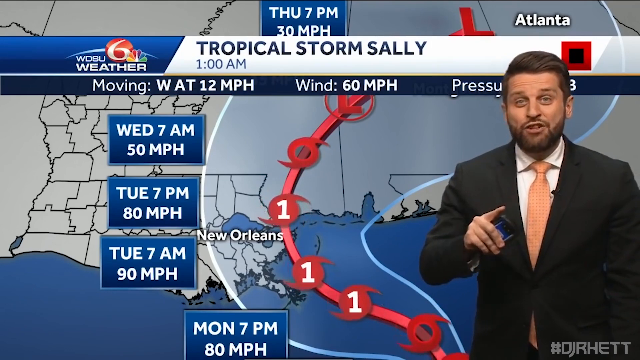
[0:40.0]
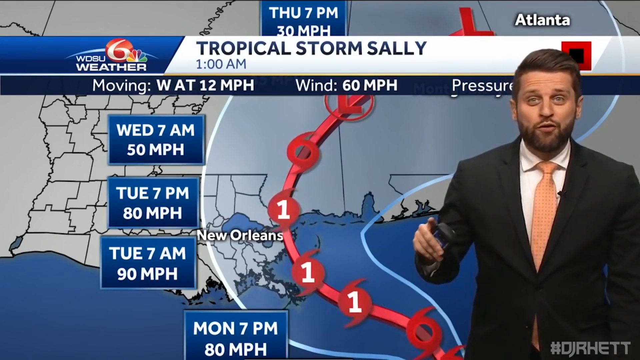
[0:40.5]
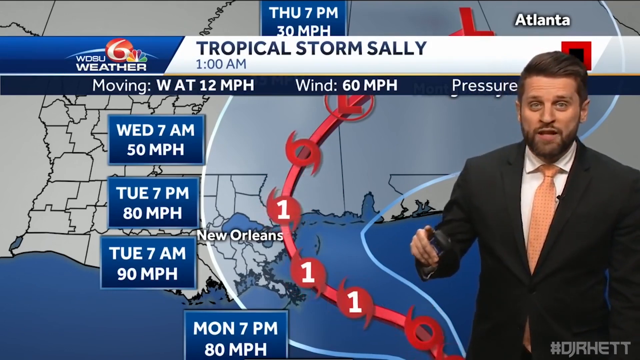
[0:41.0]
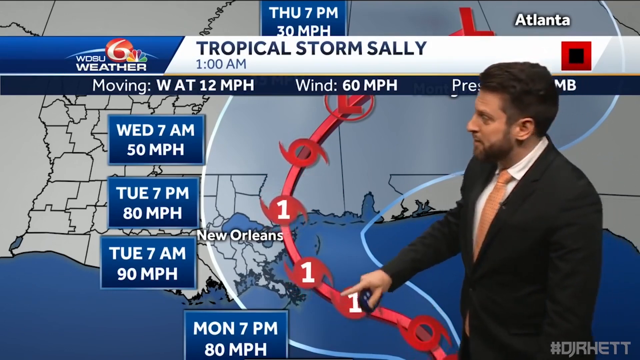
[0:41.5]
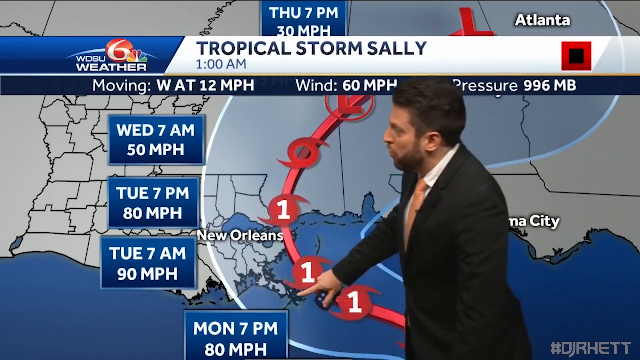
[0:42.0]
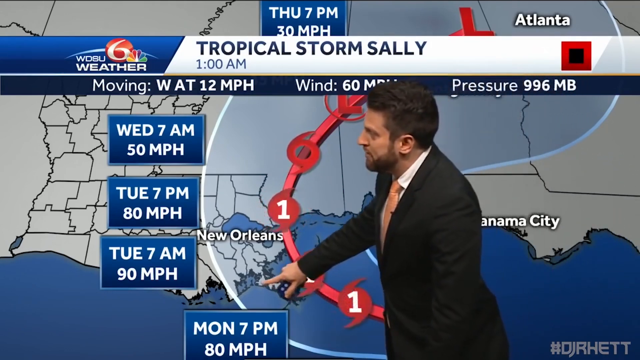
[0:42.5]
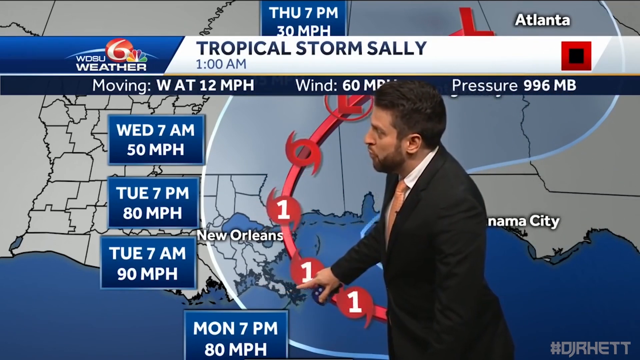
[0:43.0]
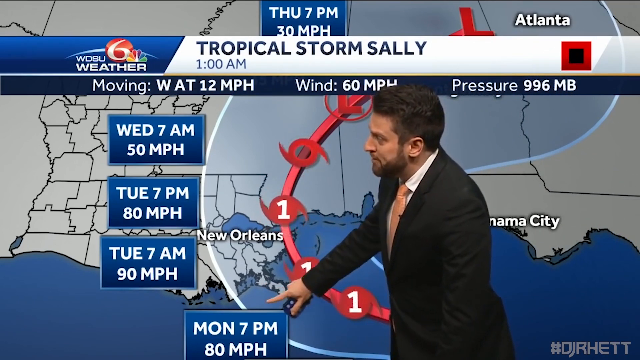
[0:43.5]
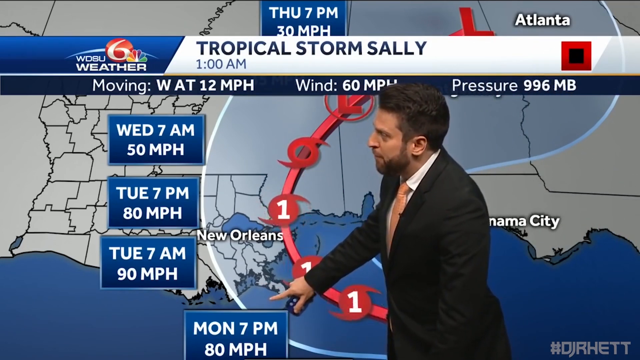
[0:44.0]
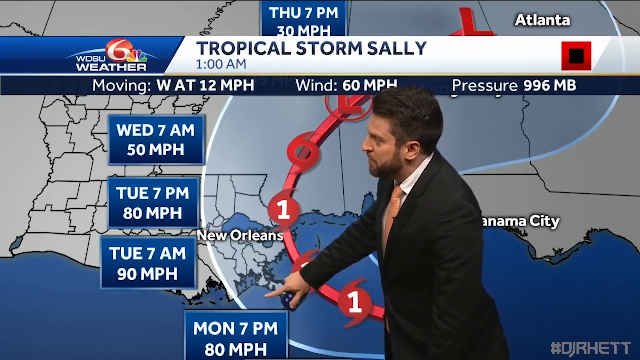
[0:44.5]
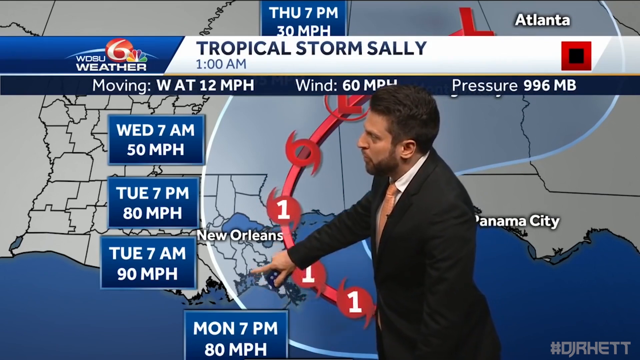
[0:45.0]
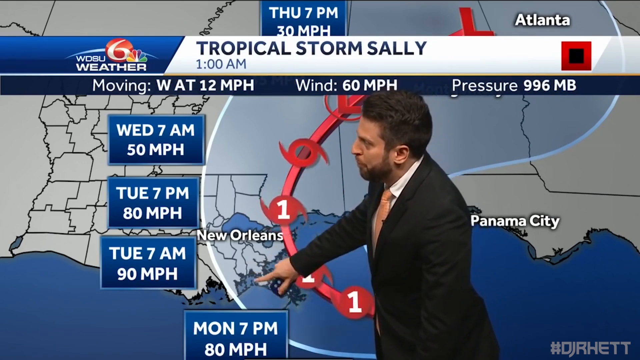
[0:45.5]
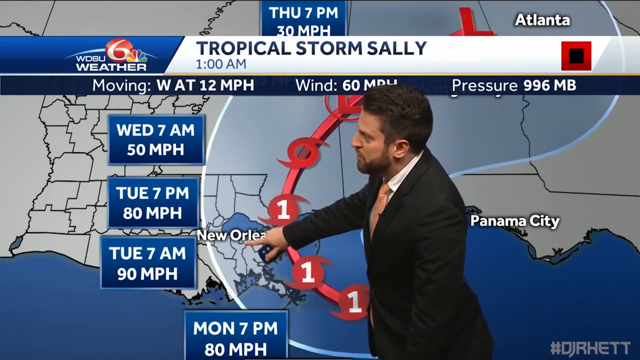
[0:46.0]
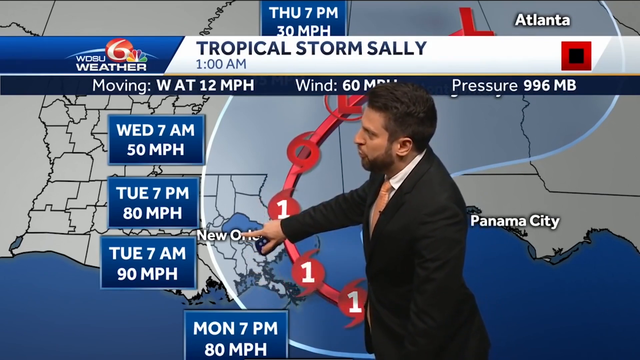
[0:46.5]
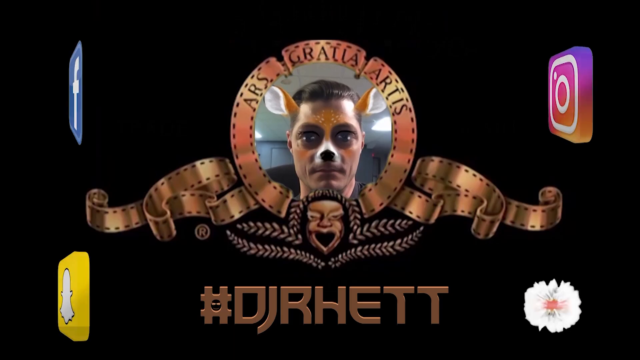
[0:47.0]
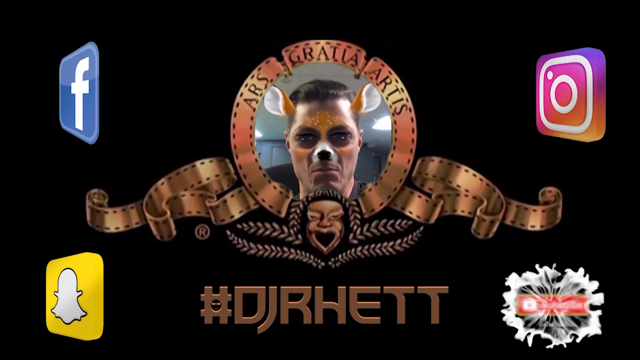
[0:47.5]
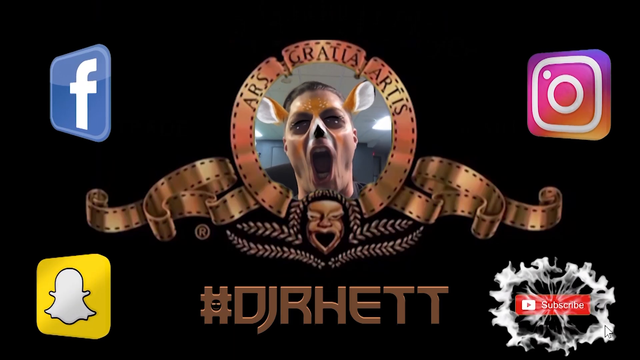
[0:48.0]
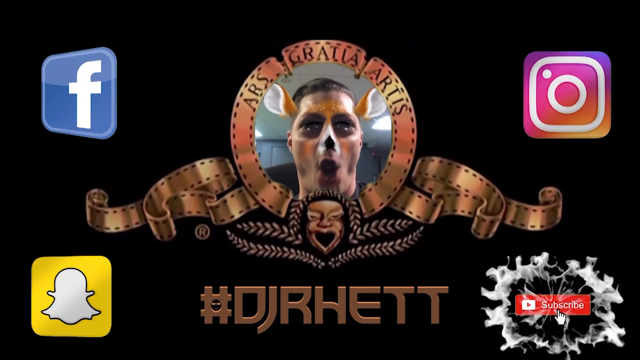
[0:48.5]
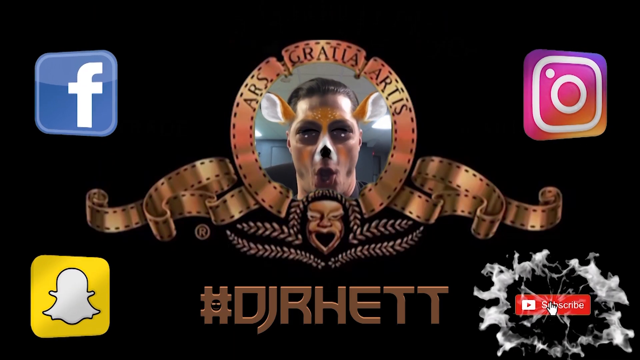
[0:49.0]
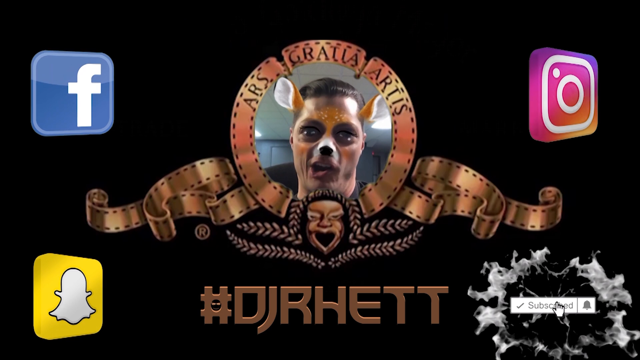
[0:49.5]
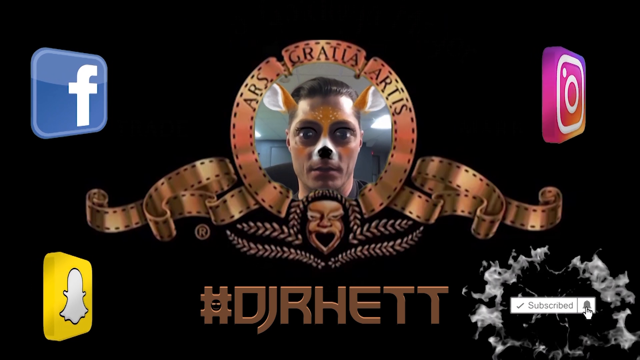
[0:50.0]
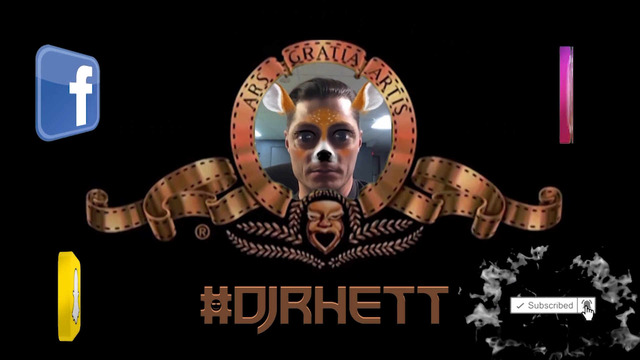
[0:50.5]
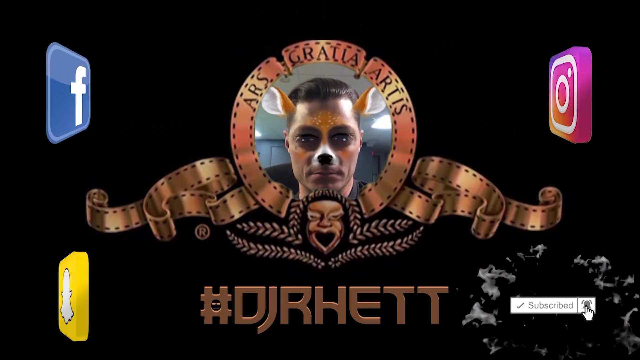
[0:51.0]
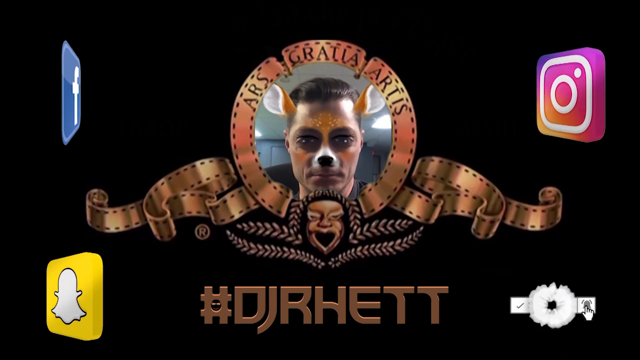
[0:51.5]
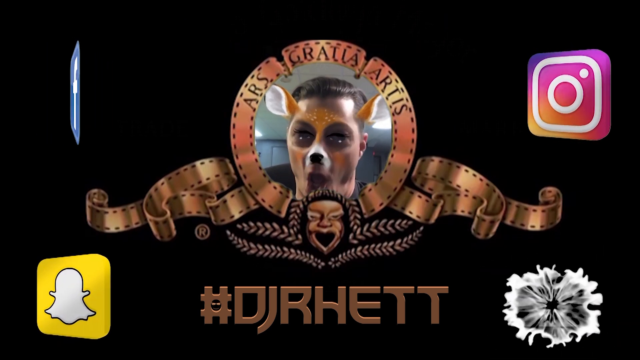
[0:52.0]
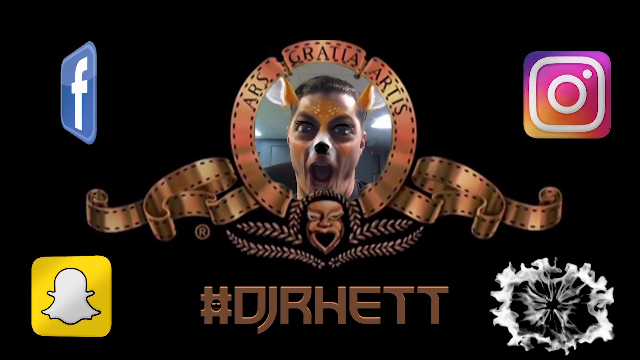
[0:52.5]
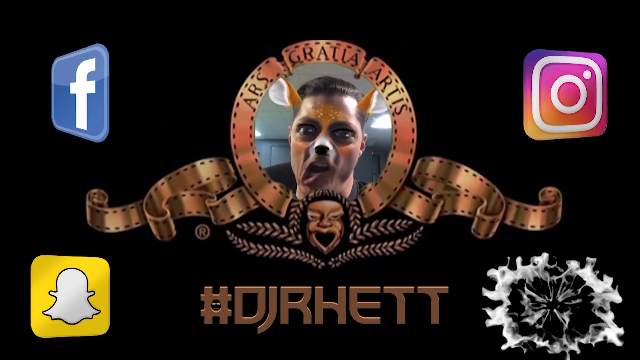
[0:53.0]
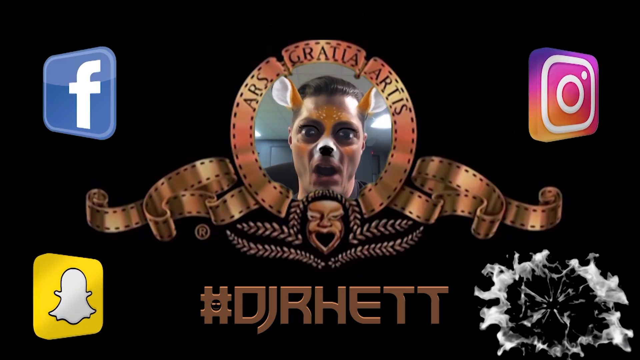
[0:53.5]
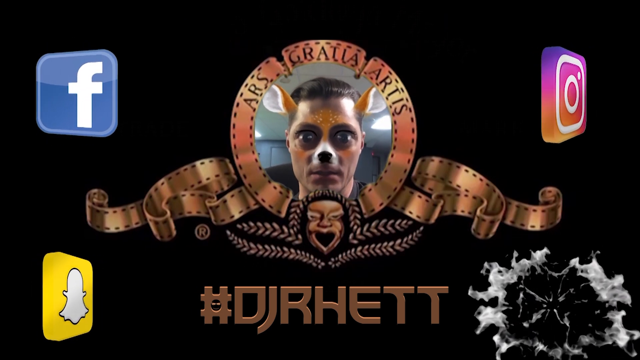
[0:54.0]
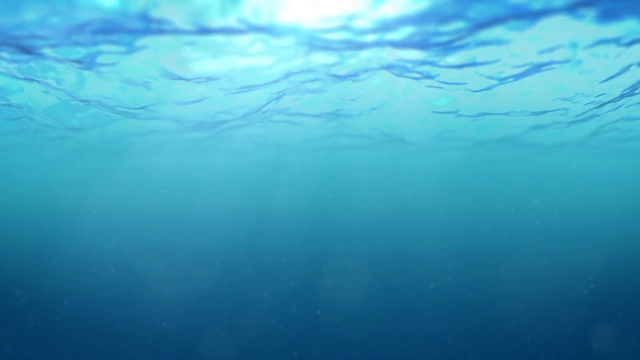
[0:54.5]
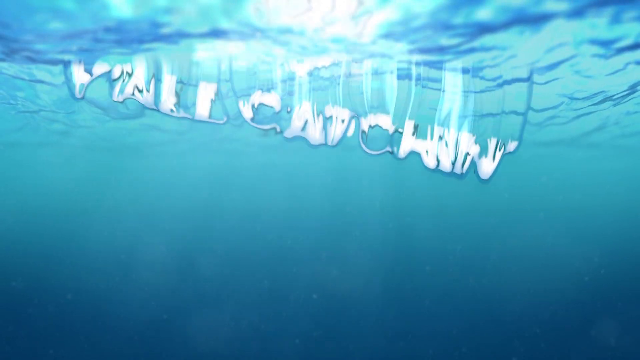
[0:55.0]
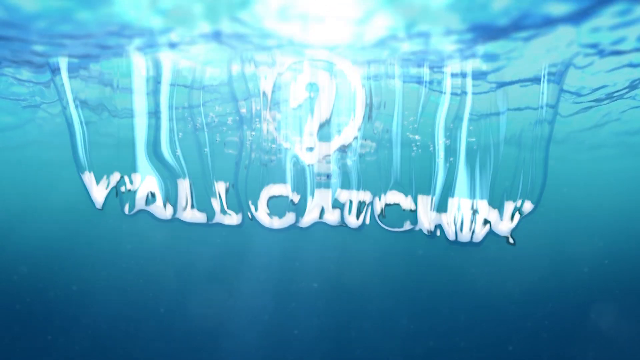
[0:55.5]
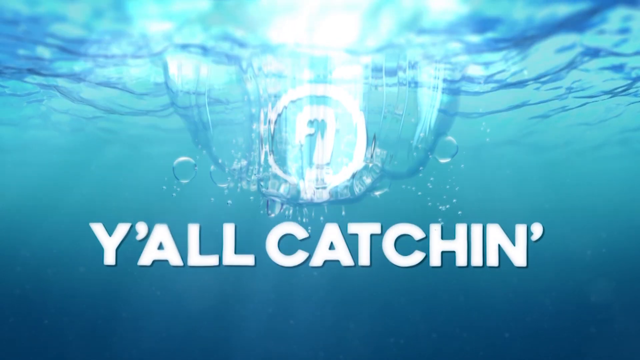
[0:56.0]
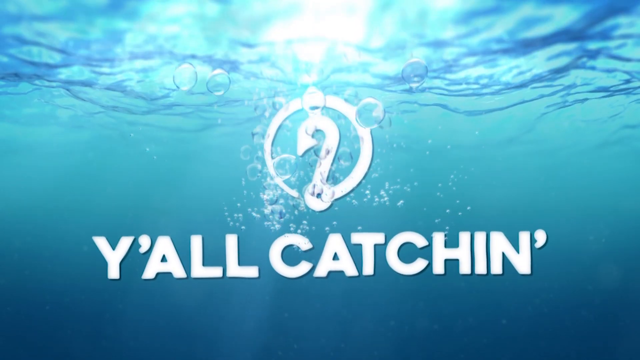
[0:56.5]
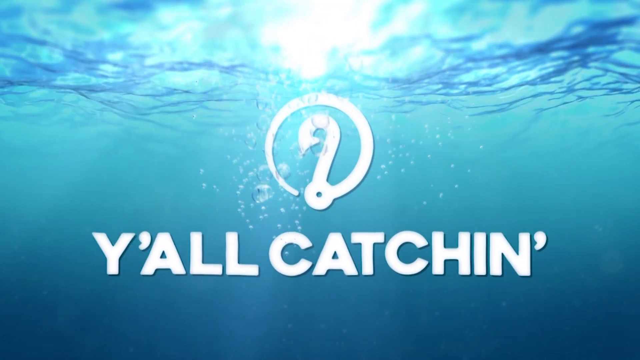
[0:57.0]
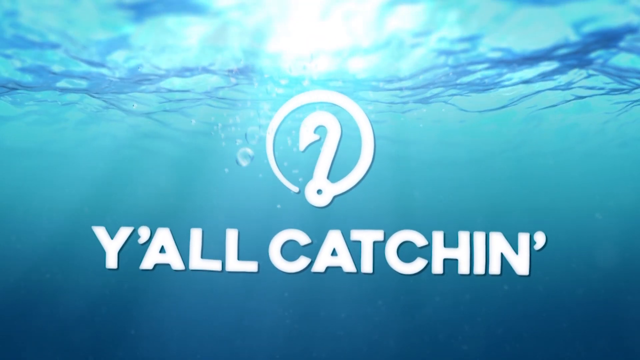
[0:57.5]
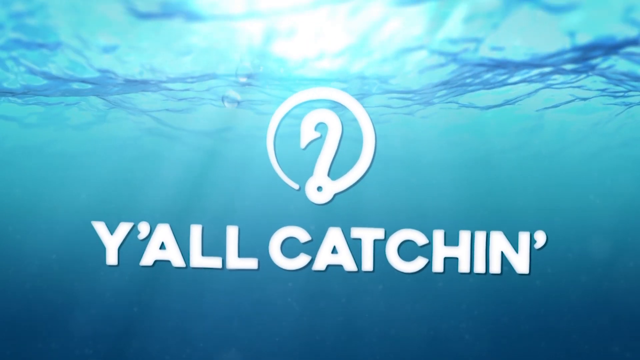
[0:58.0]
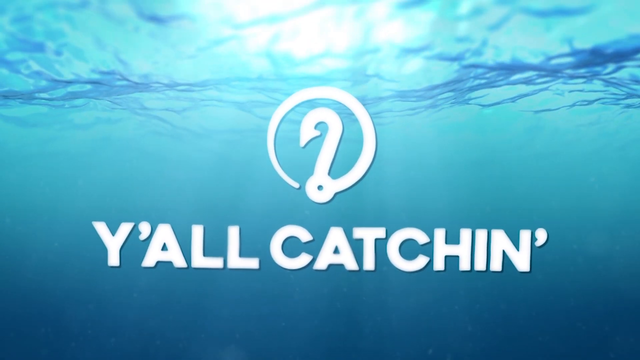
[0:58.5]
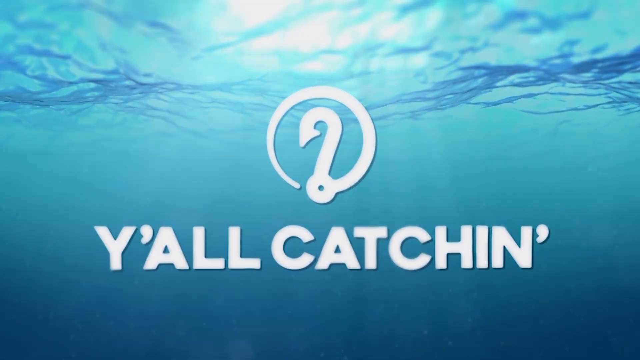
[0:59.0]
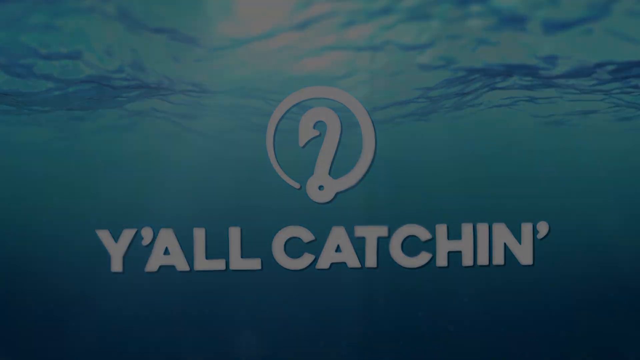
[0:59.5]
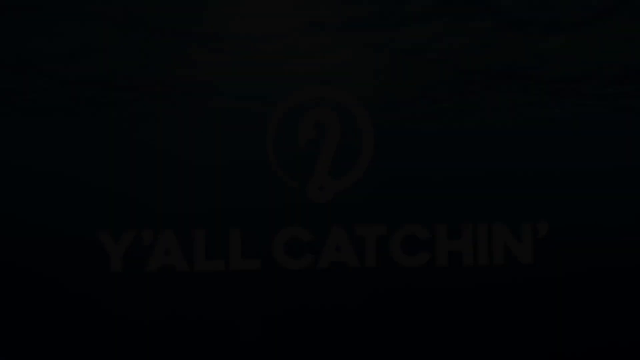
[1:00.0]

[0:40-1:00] The forecast for the incoming hurricane shows it continuing from Monday until Wednesday at 7 a.m. and gaining strength as it moves inland. On Wednesday at 7 a.m. the winds will be at 50 miles per hour, and at 7 p.m. at 80 miles per hour as it passes up toward Atlanta; by Thursday at 7 p.m. the winds die down to 30 miles per hour. Next, a man makes a joke out of the Metro-Goldwyn-Mayer logo, using a filter in which he is dressed as a deer and is like a lion, with a hashtag reading "#djrhett"; it looks very silly. Then an underwater scene appears with text reading "y'all catching" and a picture of a hook, and the video ends.